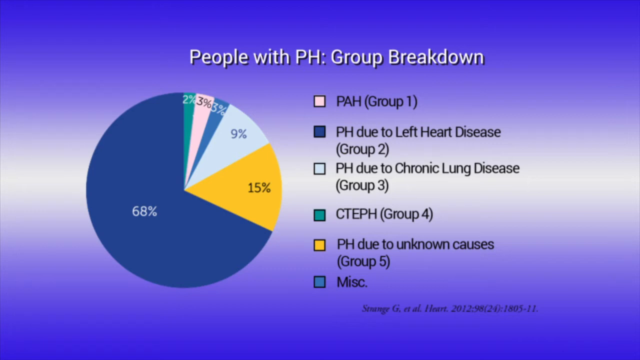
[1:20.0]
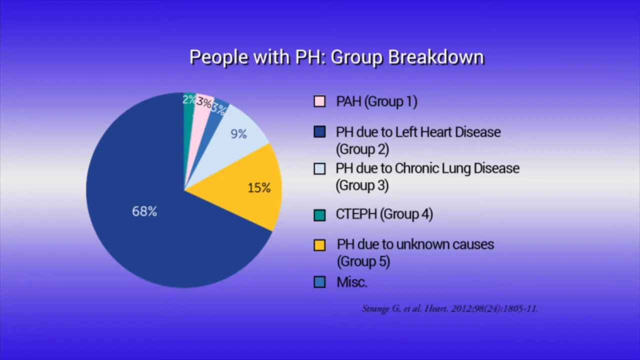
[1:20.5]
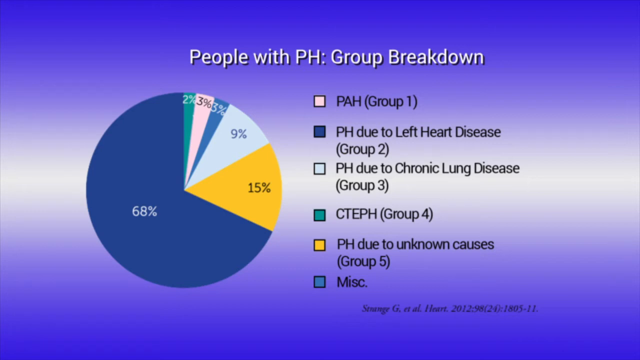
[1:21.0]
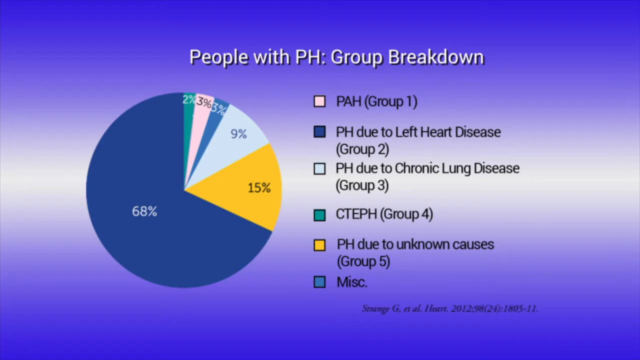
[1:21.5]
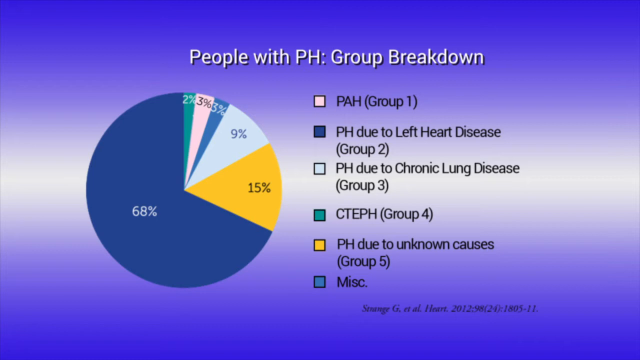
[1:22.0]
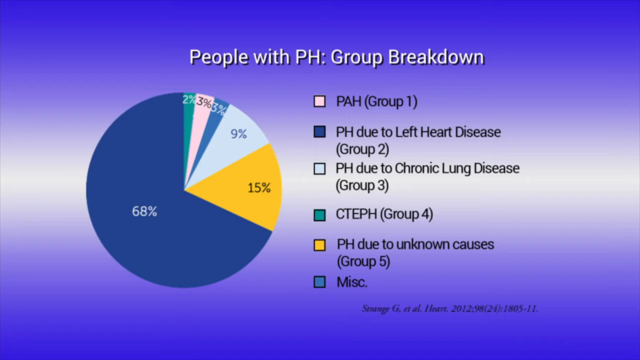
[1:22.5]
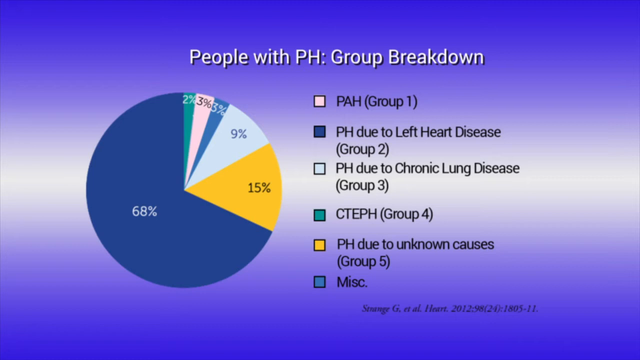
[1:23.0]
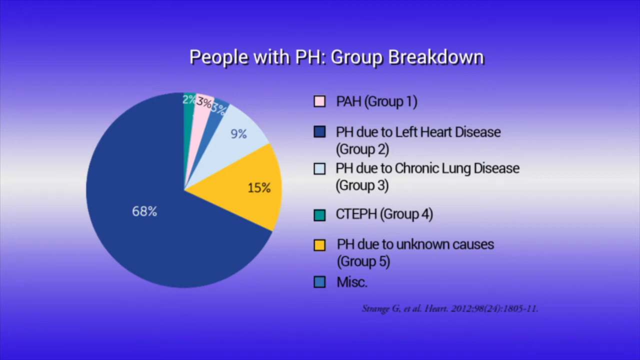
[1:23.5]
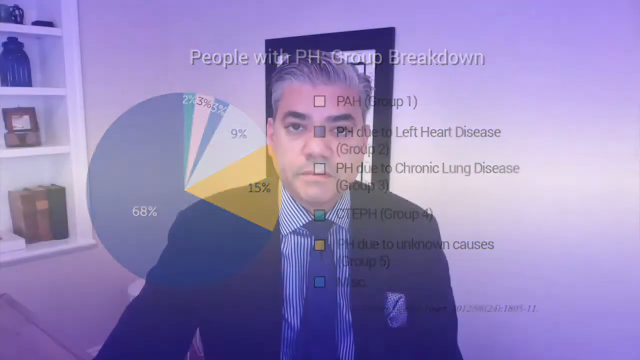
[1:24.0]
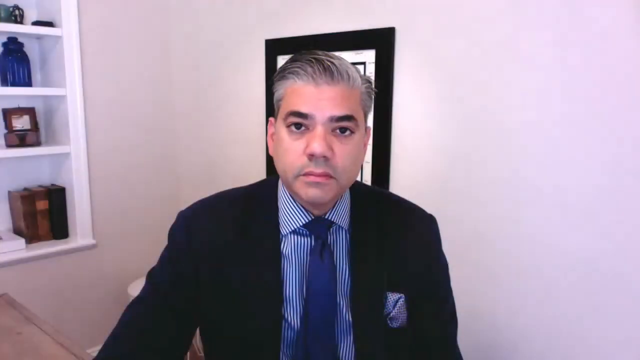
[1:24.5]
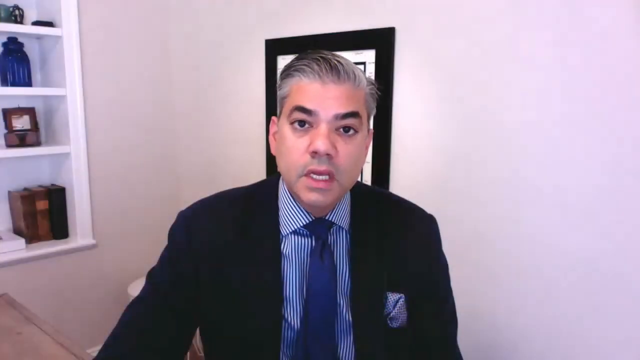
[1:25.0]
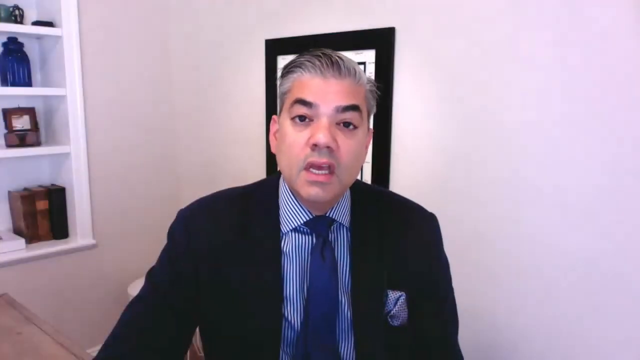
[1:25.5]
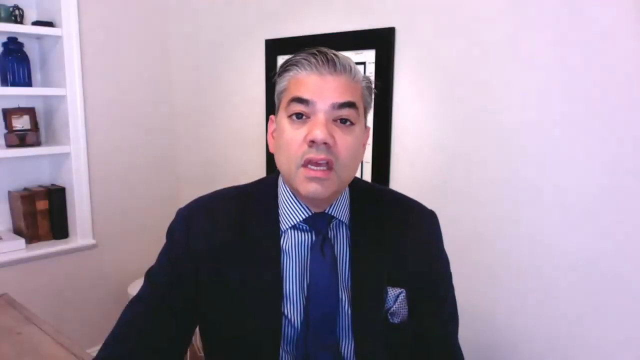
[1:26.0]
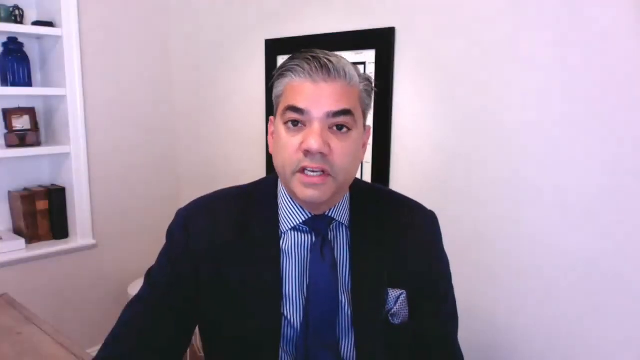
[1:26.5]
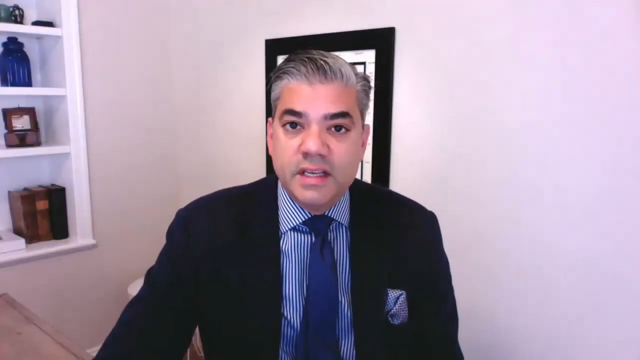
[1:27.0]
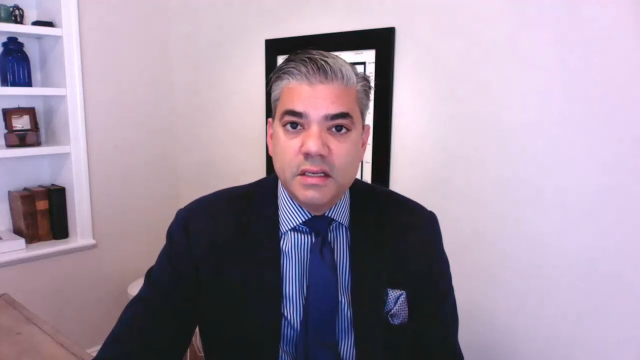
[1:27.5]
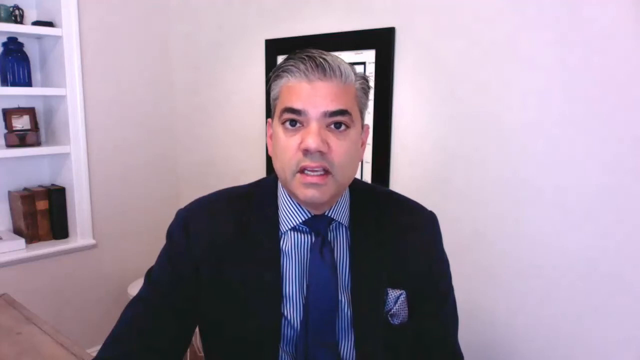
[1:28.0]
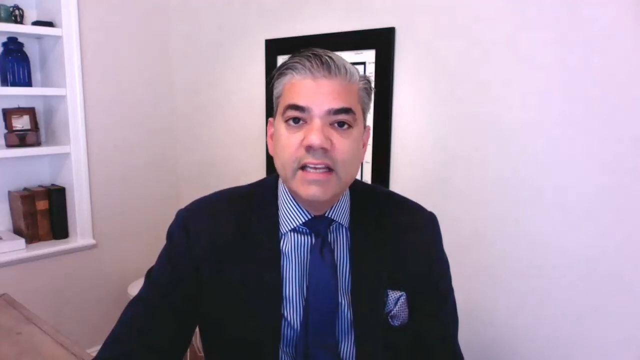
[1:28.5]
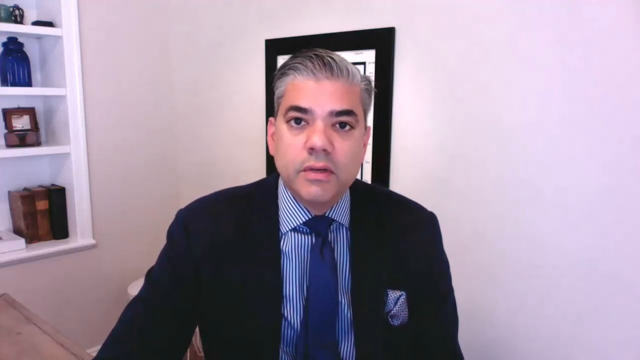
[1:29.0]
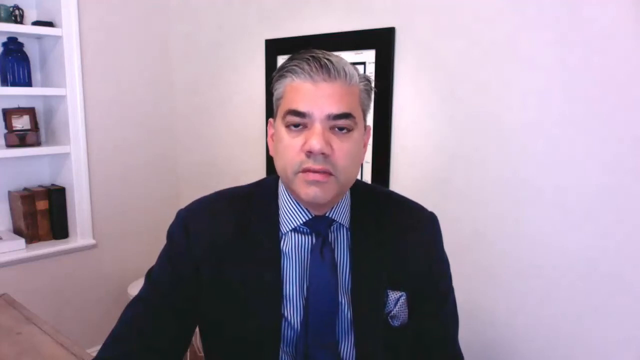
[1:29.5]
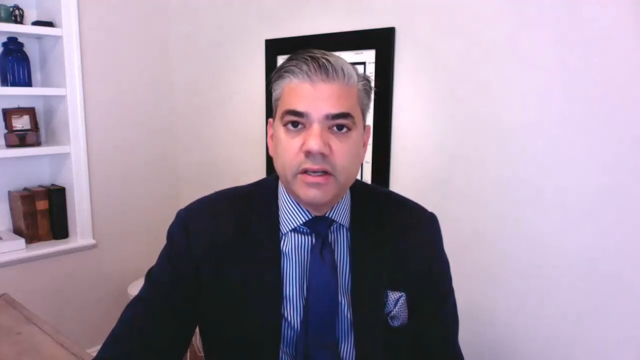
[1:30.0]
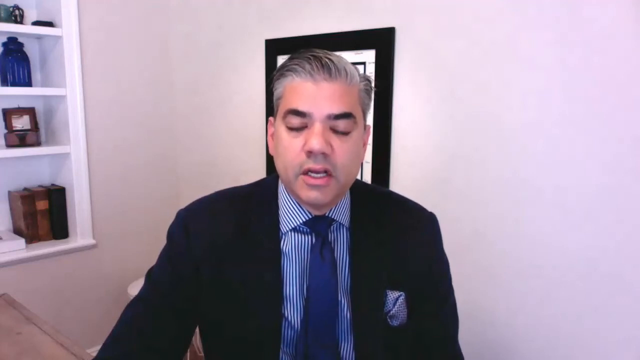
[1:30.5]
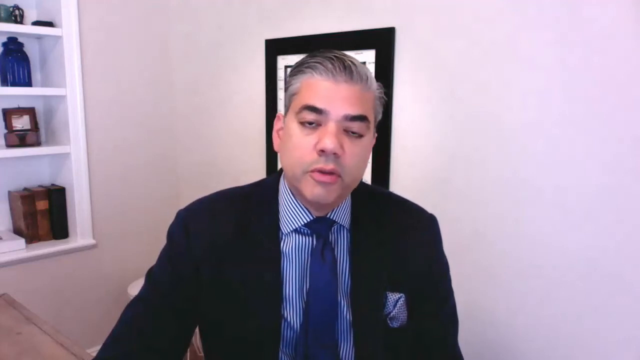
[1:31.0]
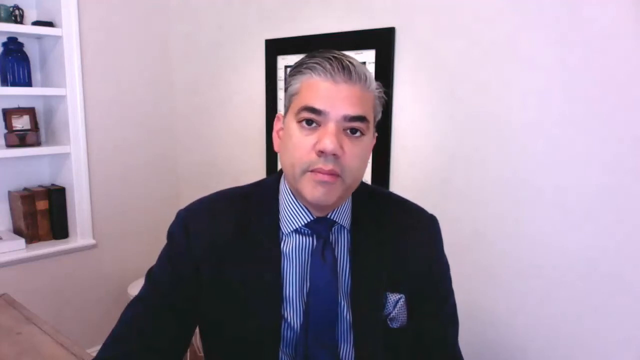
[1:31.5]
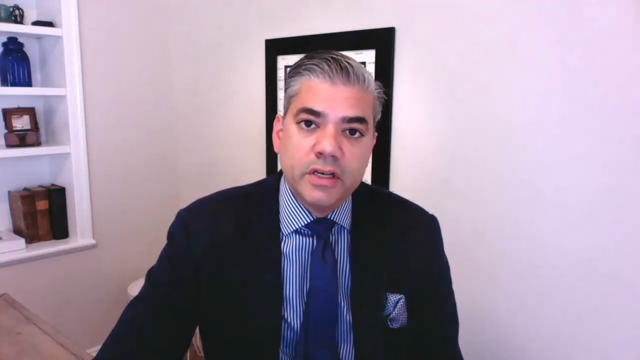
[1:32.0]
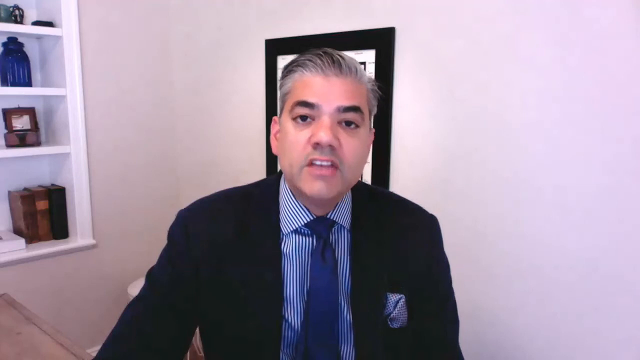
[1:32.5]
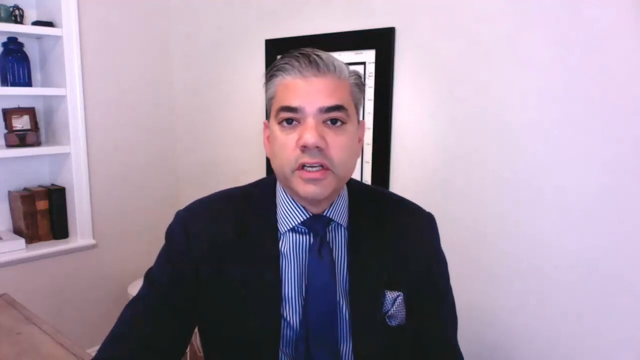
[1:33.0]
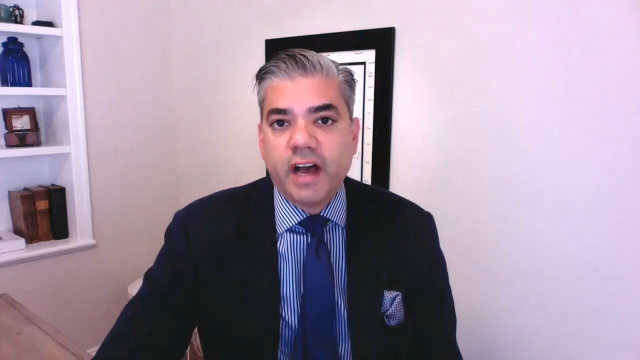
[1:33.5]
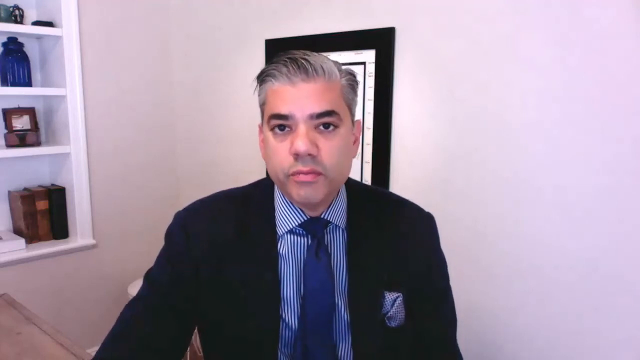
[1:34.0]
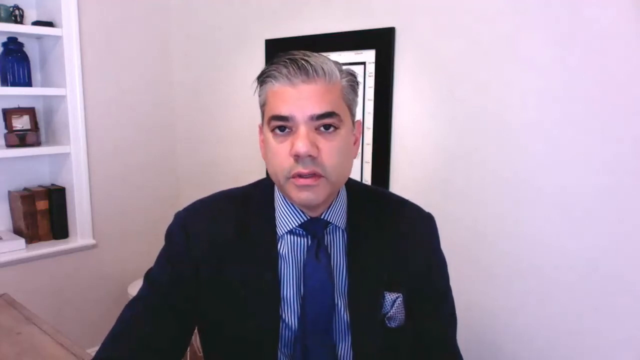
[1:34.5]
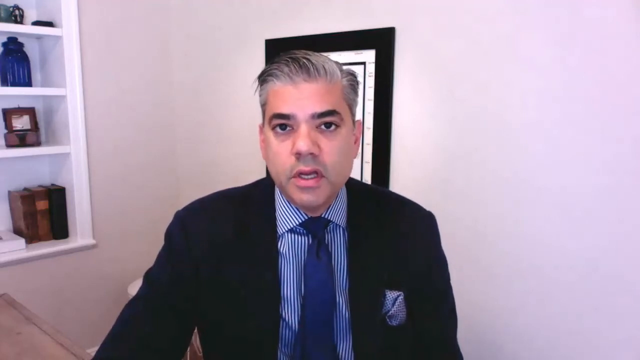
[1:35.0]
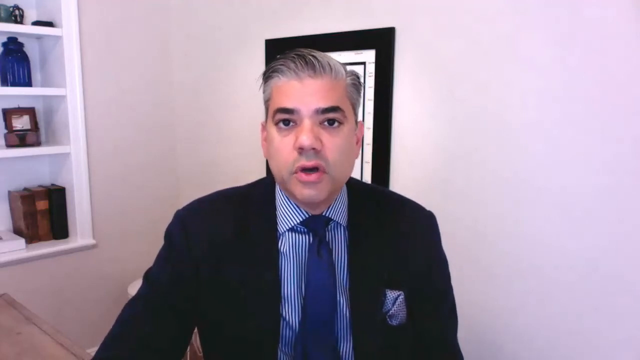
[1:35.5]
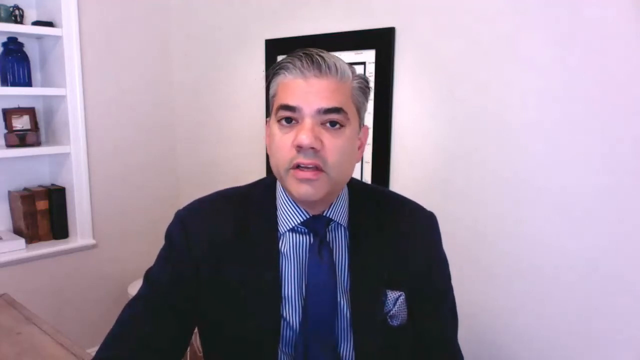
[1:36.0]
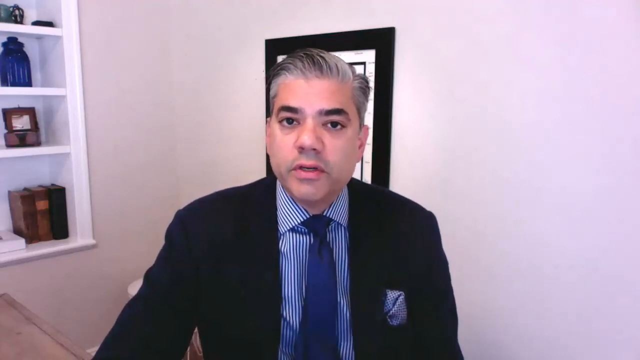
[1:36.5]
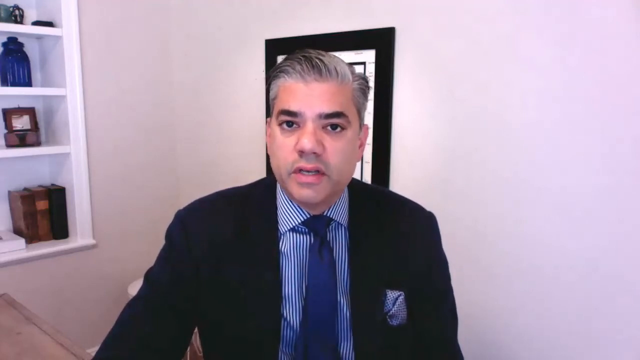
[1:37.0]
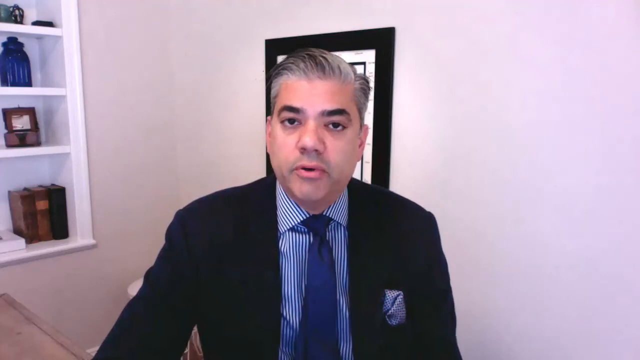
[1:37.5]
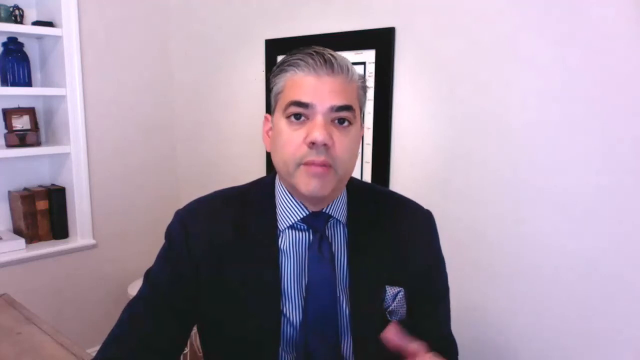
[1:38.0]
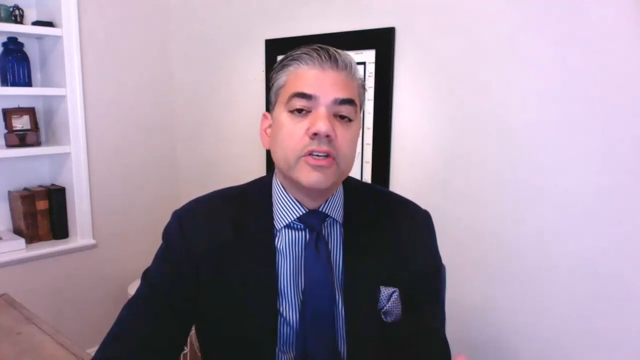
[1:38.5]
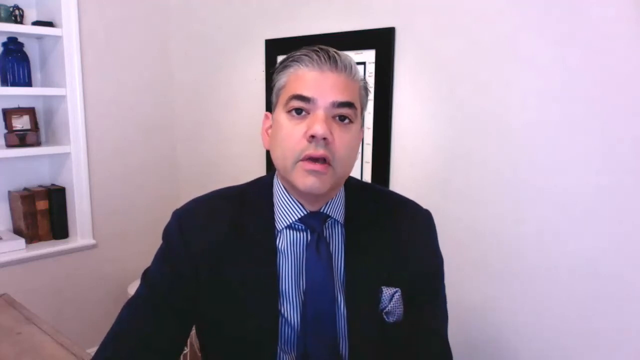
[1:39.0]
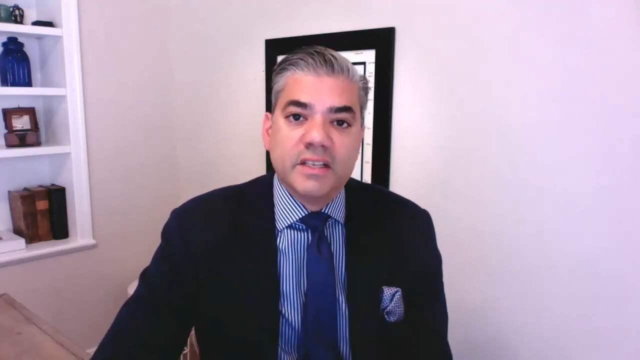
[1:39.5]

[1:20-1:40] The pie chart stays unchanged for about five seconds, with its percentages clearly labeled on the left (68%, 15%, 9%, 3%, 3% and 2%), the color legend on the right and the heading "people with PH group breakdown" at the top. The video then zooms back to the man, who continues speaking in the center of the screen in a blue suit, a blue and white striped shirt, a blue tie and a pocket square. The bookcase is on the left-hand side, his right, still with its objects, and the wall behind him is off-white or white. He has gray hair, darker eyebrows and is clean-shaven. He looks directly at the camera, with an engaging look and professional, polite body language.